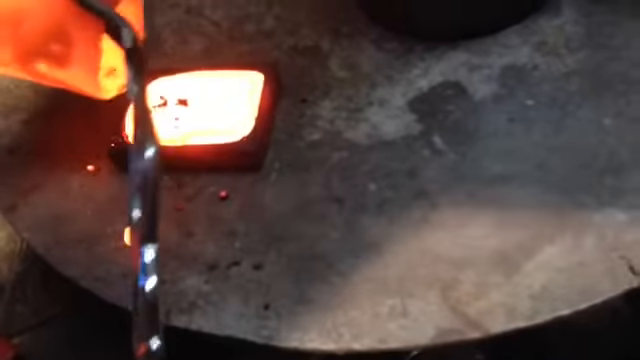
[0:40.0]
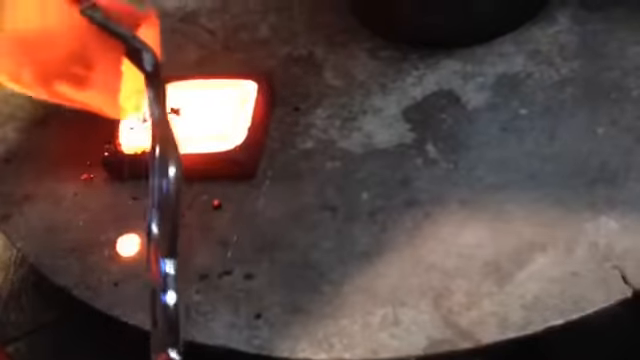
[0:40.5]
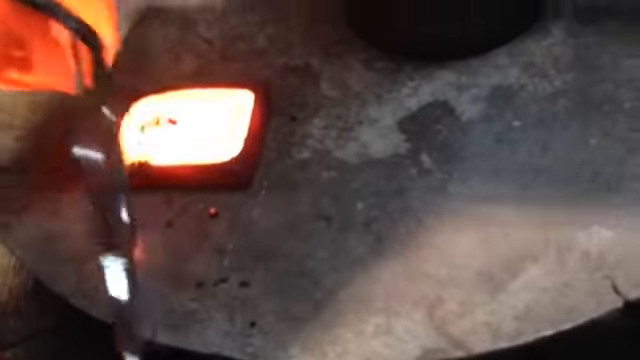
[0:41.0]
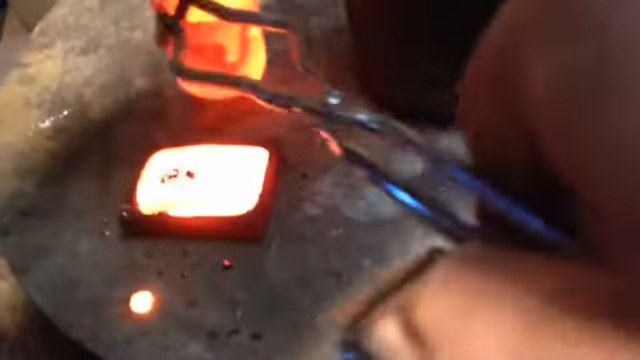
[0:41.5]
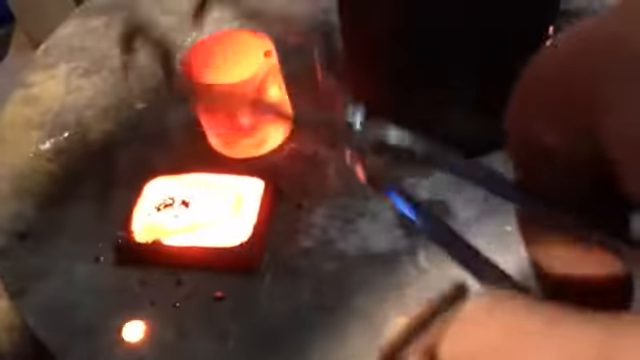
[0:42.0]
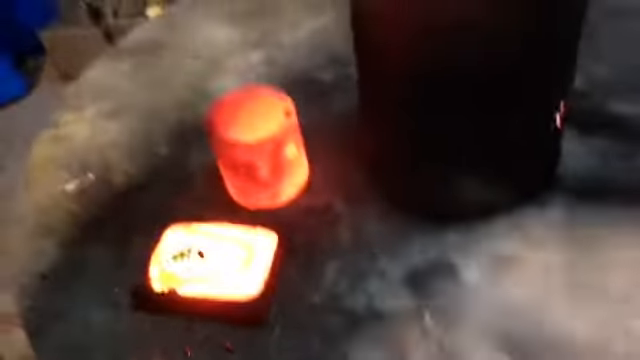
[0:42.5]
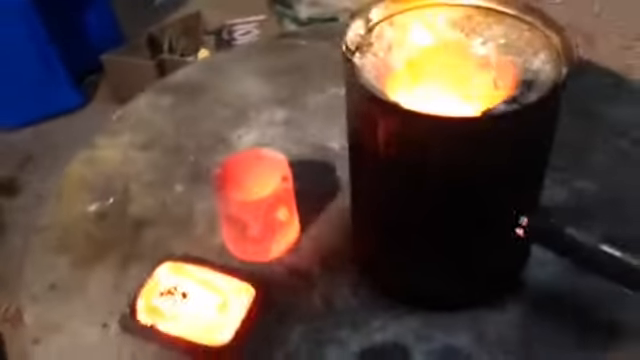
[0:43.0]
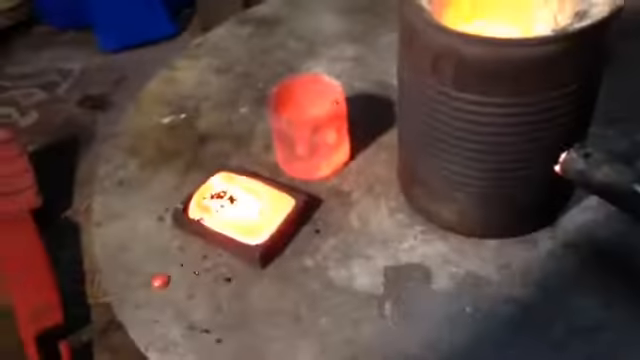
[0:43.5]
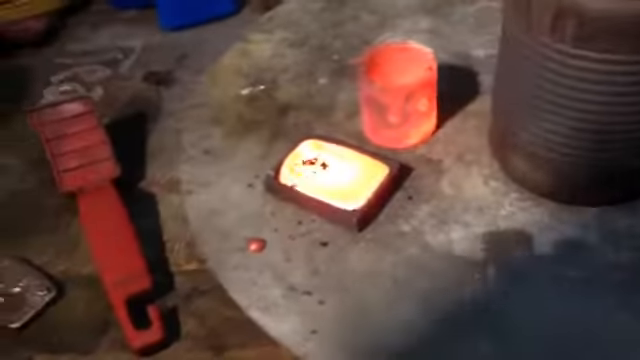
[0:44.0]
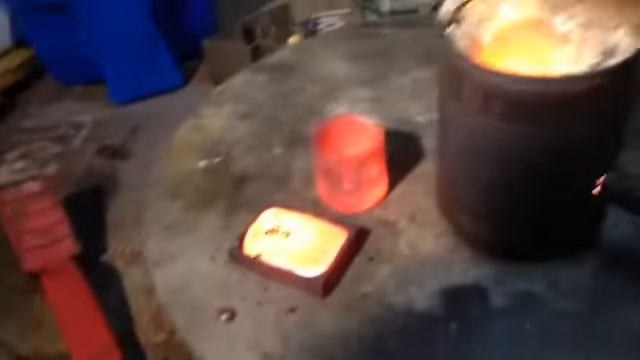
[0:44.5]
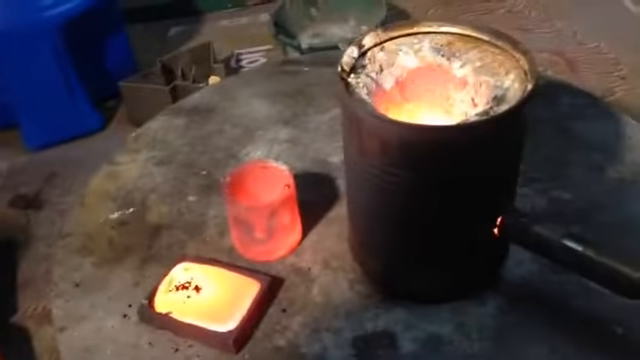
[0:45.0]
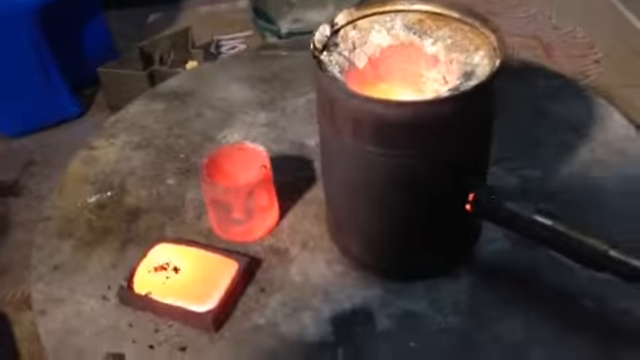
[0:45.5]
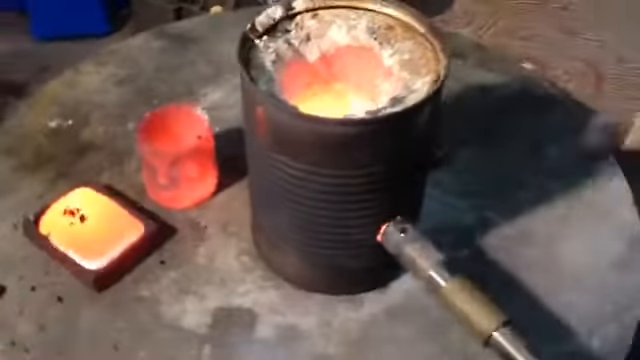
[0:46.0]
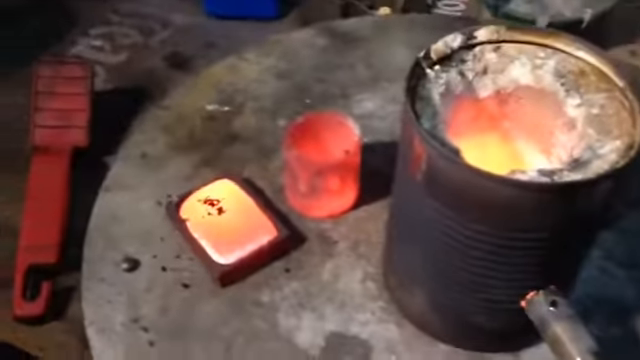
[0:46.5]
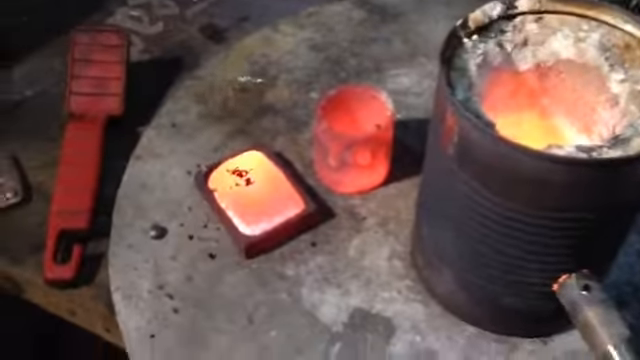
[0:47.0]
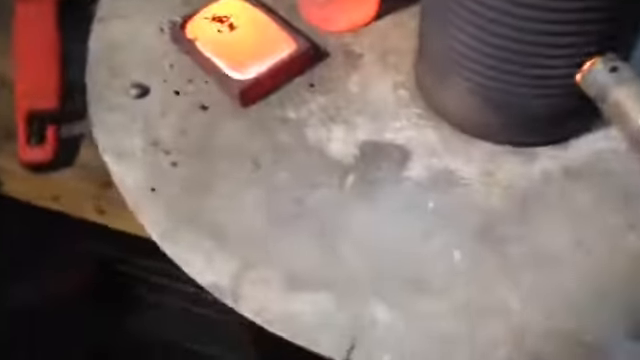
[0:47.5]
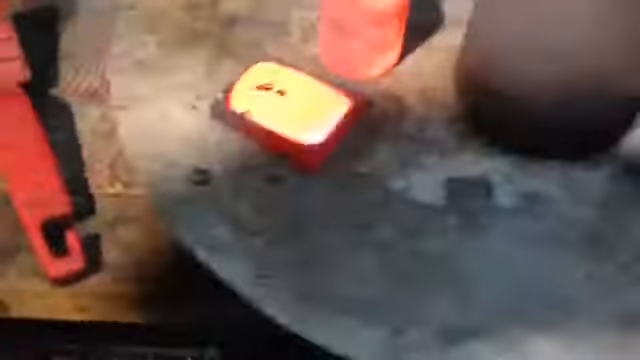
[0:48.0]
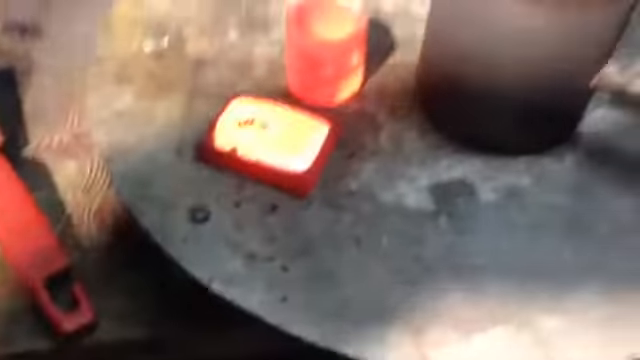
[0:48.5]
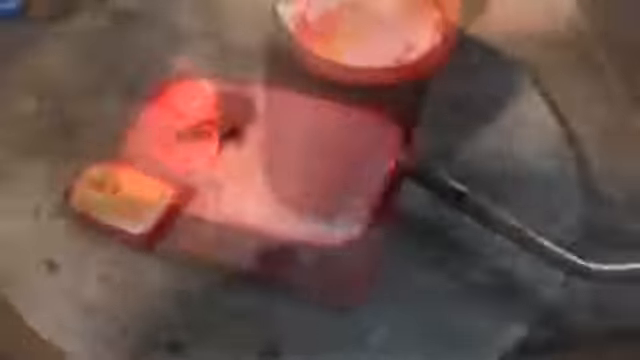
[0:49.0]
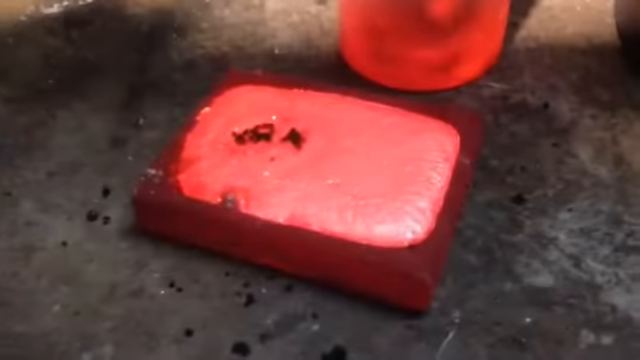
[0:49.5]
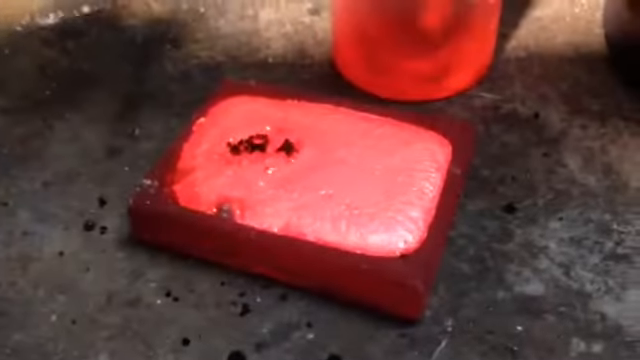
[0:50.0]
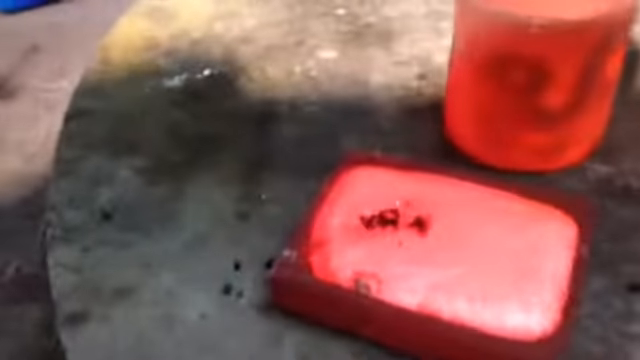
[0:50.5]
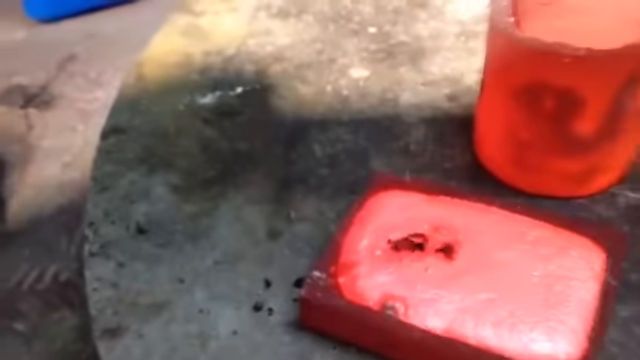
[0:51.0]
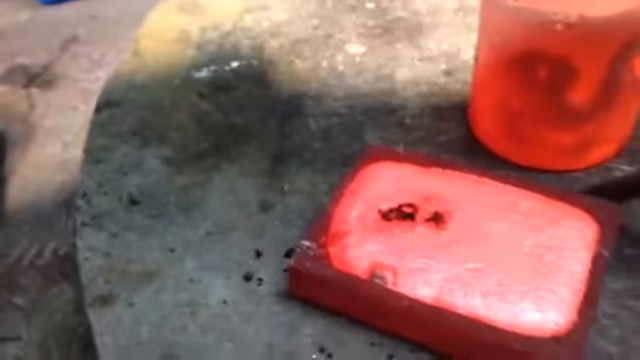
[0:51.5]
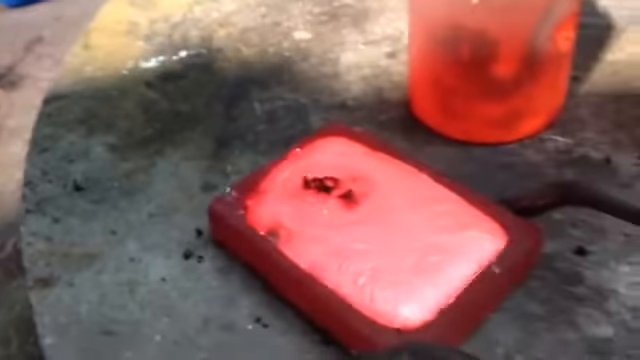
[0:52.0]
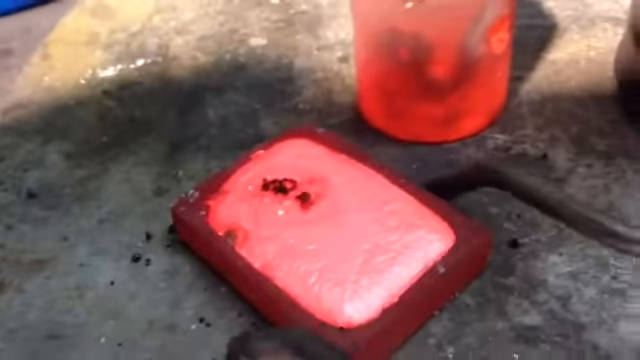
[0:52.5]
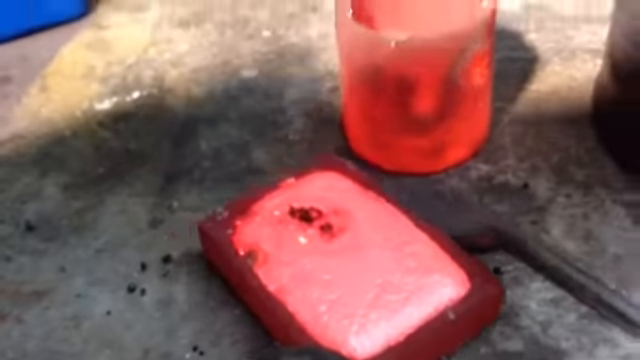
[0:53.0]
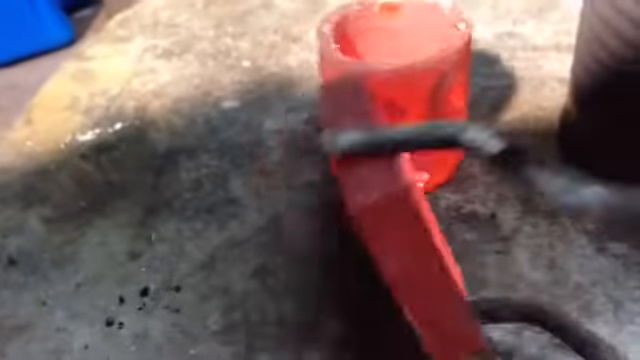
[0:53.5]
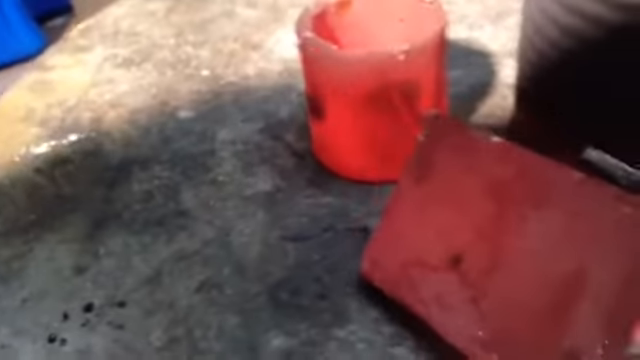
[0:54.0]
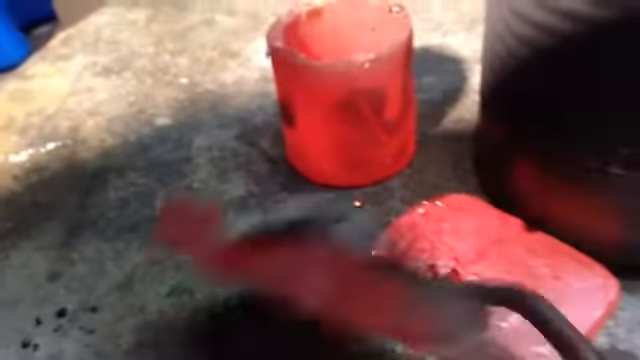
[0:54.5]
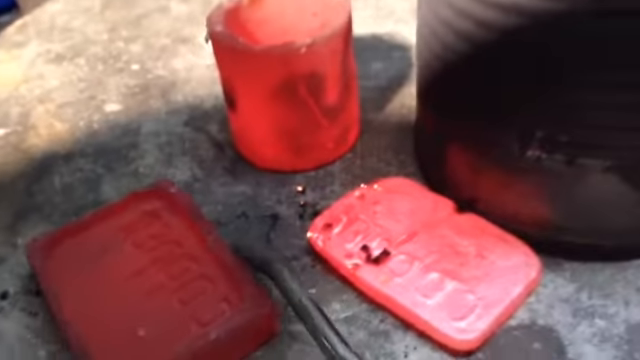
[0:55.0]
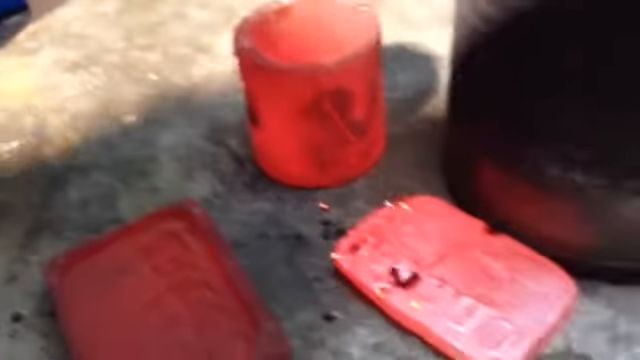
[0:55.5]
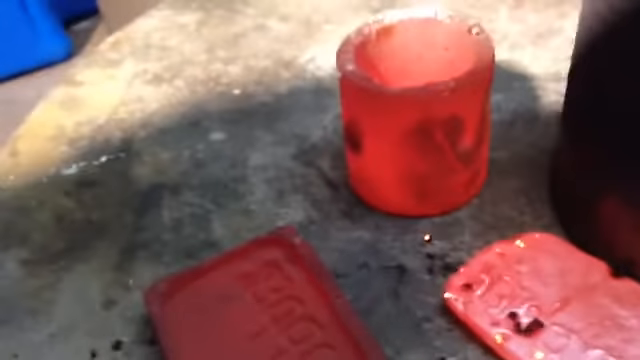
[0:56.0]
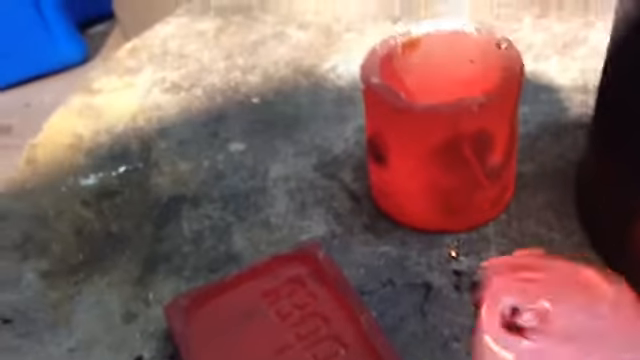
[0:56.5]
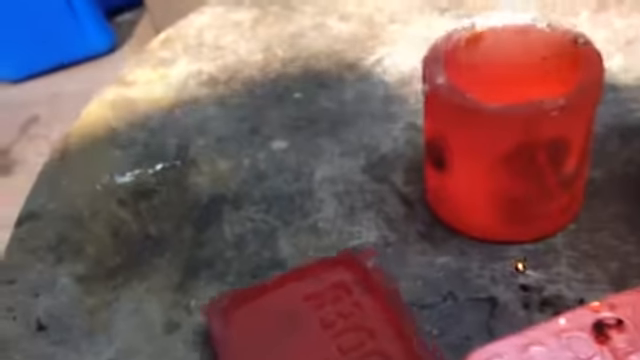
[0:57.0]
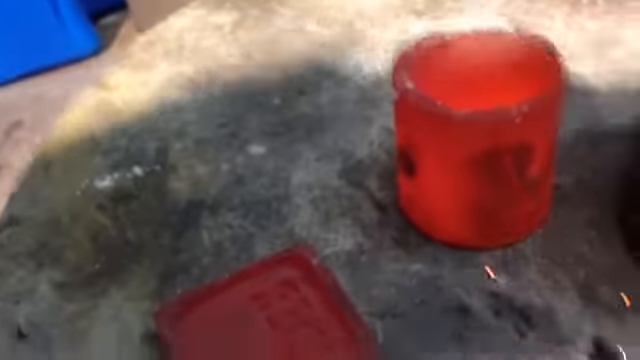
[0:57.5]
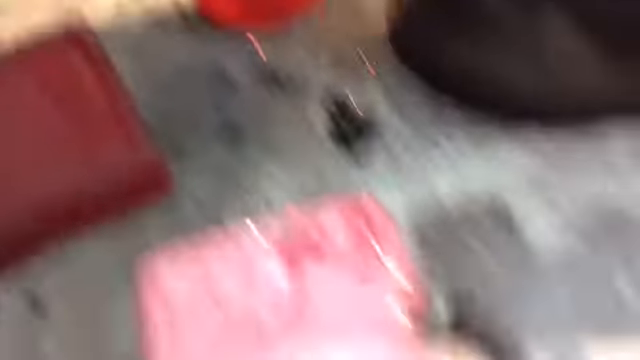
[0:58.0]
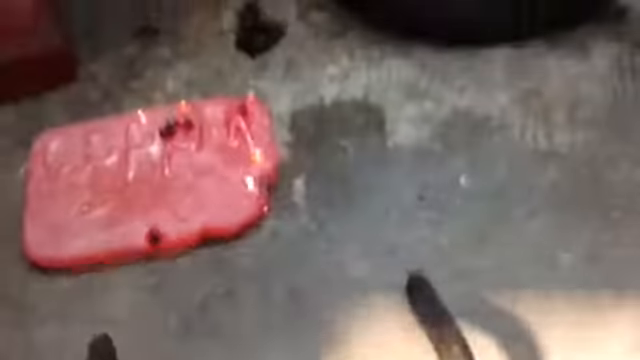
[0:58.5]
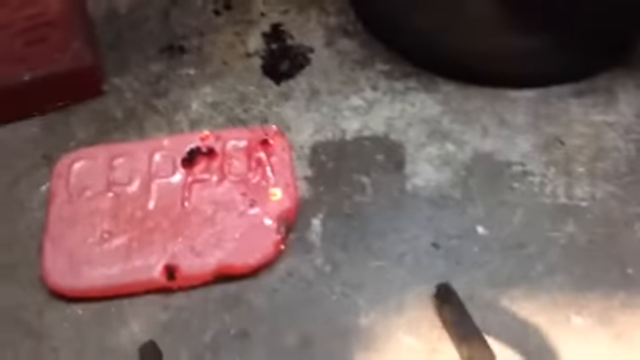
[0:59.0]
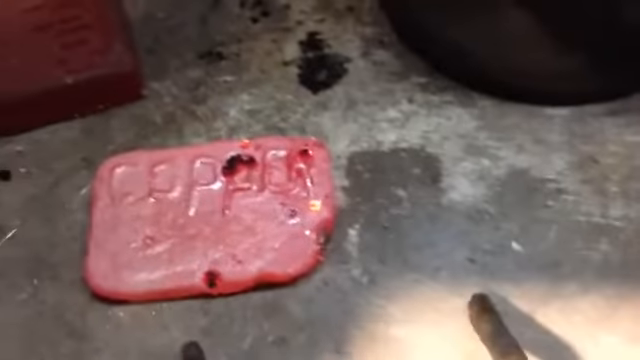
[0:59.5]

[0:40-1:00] A gray rounded table, most likely metal, is in view, with gray tongs on the left side. The person uses the tongs to hold an orange and yellow rounded cup that is white hot, pours a bright yellow-white substance out of it into a brown square plate, and puts the cup down on the round table. At the center is the dark brown barrel with a brown metal pipe attached to its right side and a yellow flame inside. The person moves around with the camera. A square, reddish-brown piece with a pinkish center looks like it is starting to cool as the person flips it over with the grey metal tongs; there seems to be a little encased wording that says "copper" on the back of it.